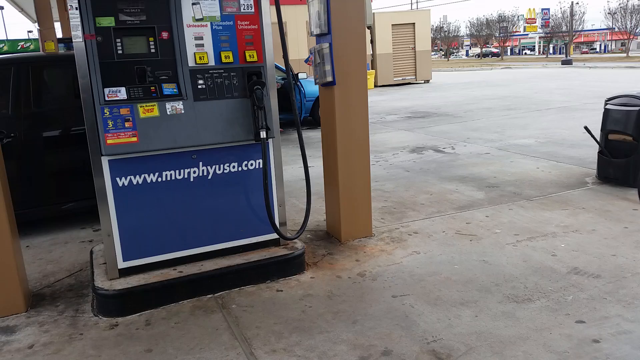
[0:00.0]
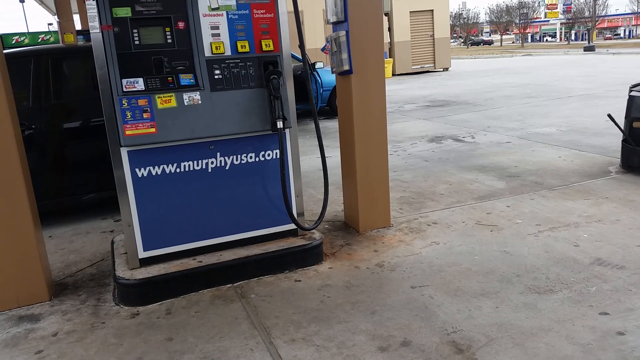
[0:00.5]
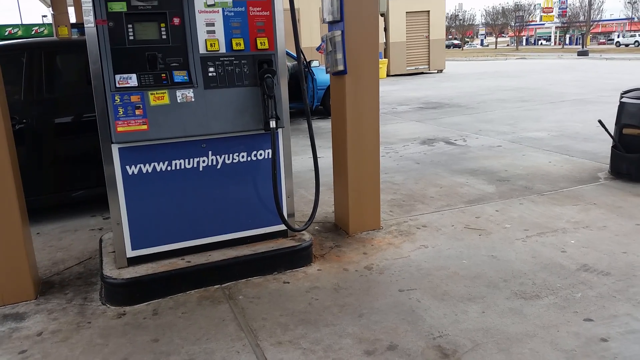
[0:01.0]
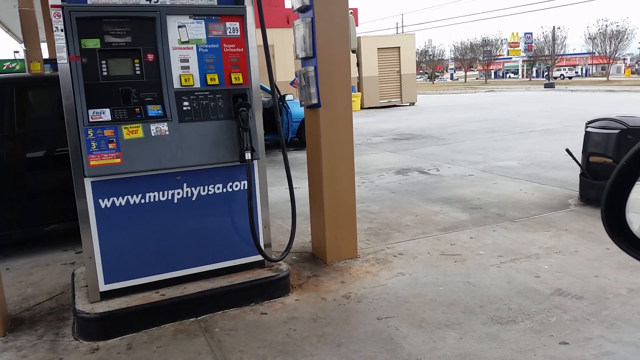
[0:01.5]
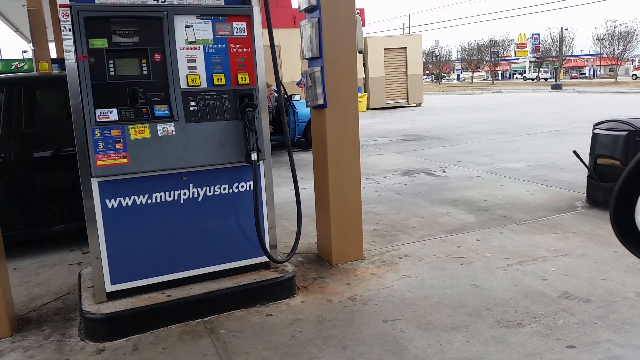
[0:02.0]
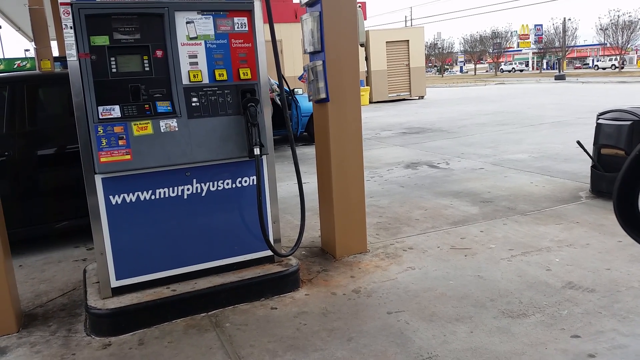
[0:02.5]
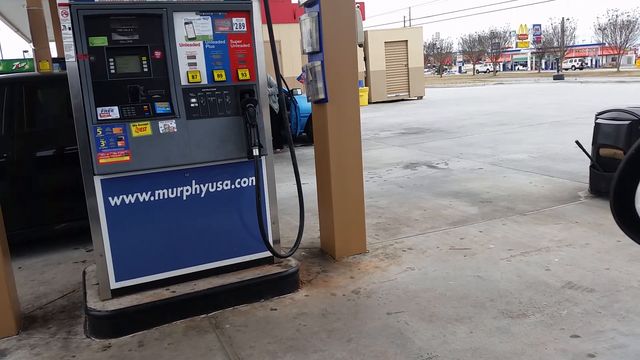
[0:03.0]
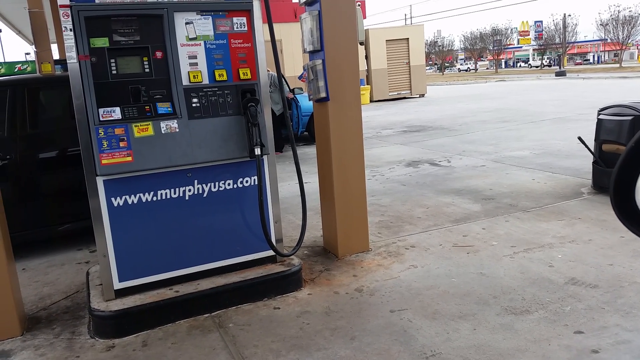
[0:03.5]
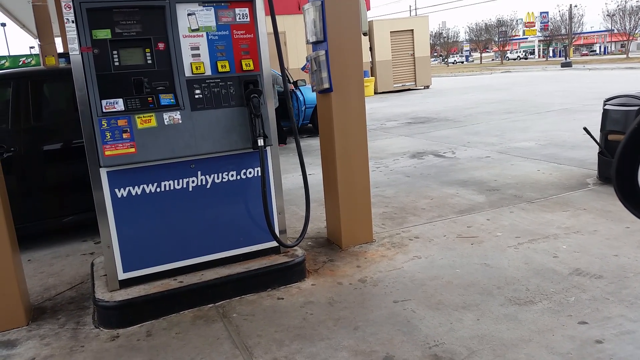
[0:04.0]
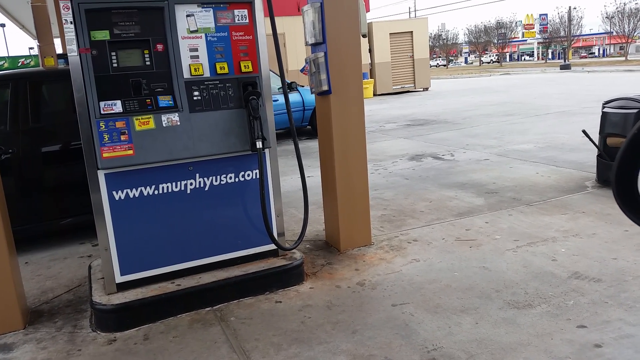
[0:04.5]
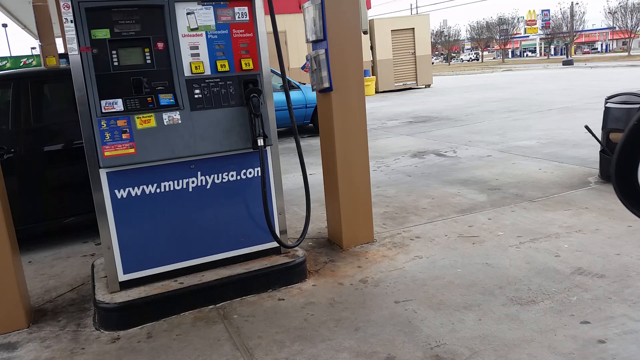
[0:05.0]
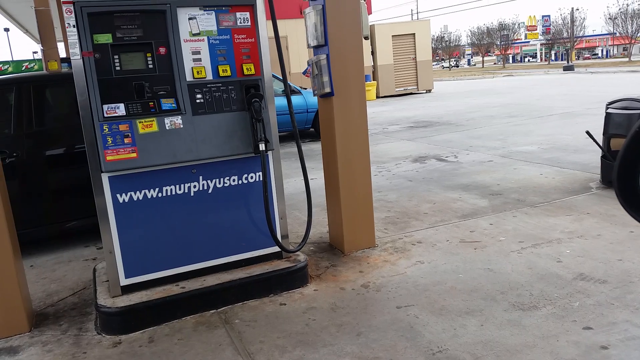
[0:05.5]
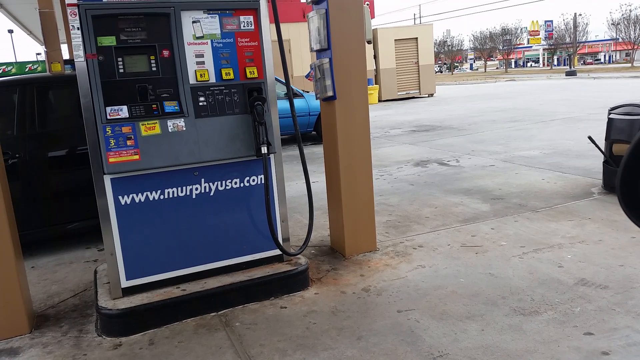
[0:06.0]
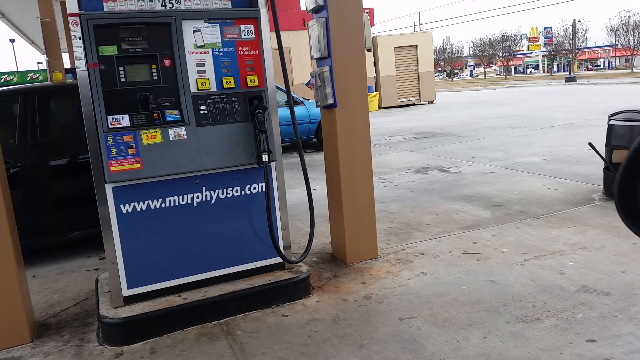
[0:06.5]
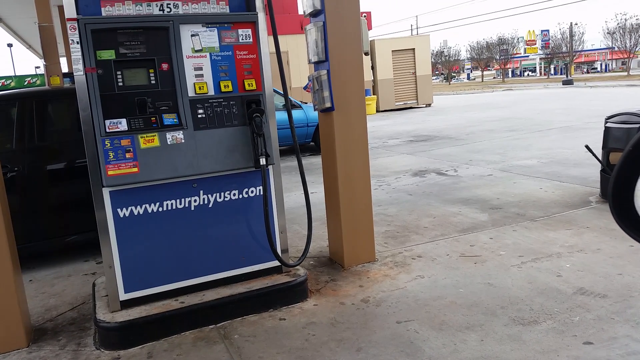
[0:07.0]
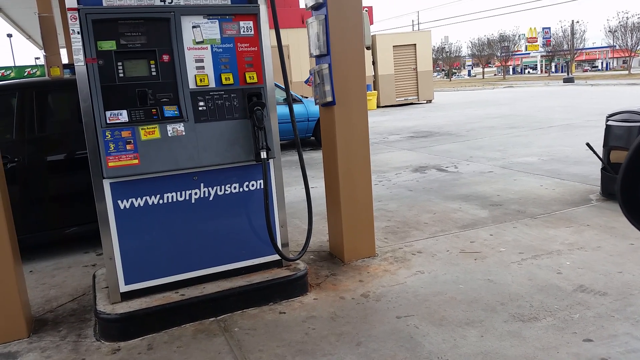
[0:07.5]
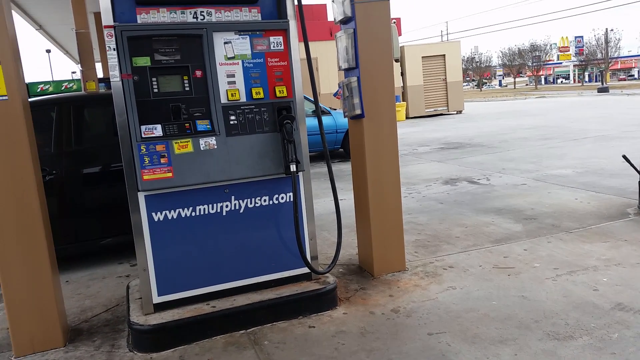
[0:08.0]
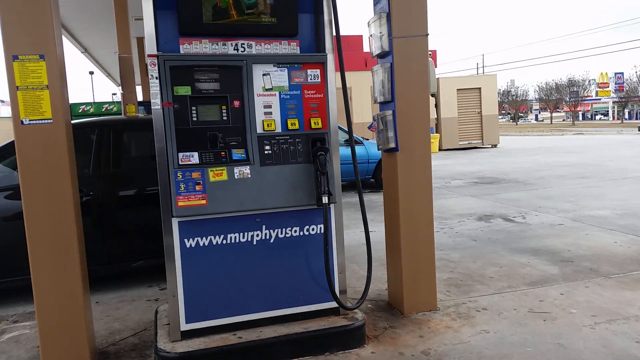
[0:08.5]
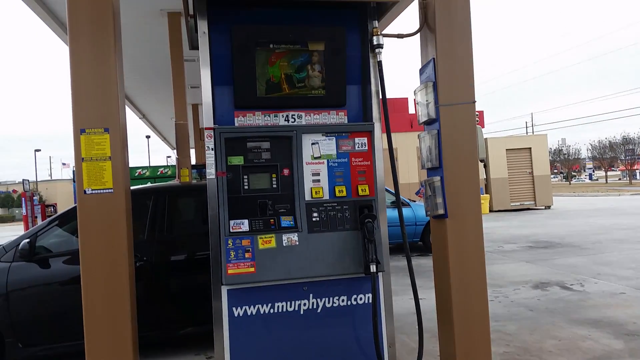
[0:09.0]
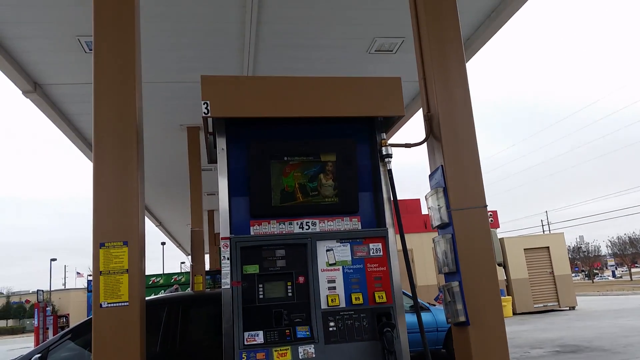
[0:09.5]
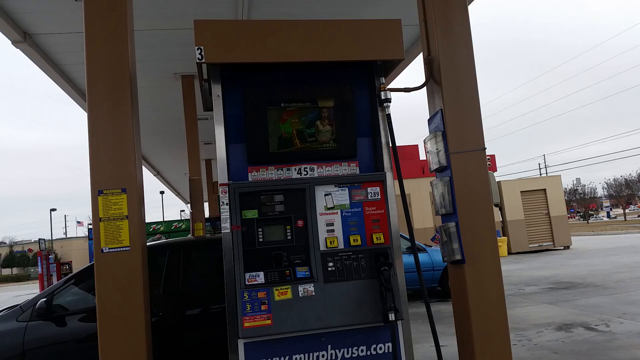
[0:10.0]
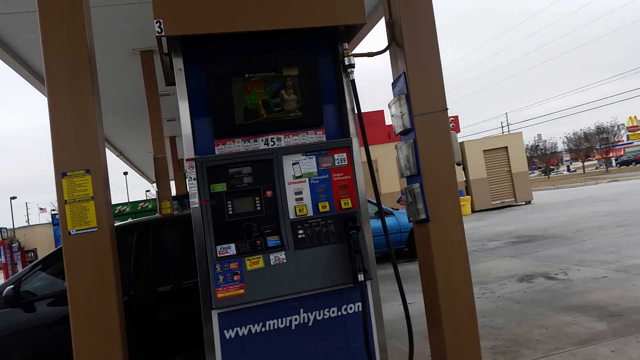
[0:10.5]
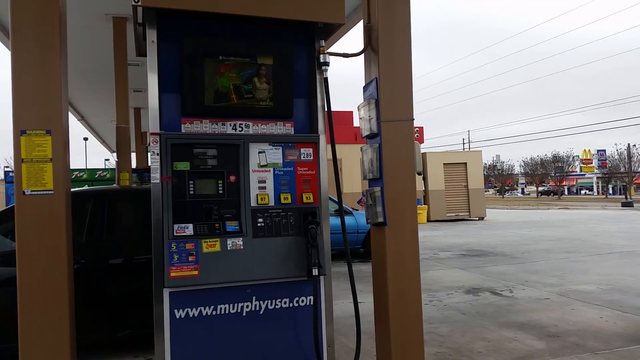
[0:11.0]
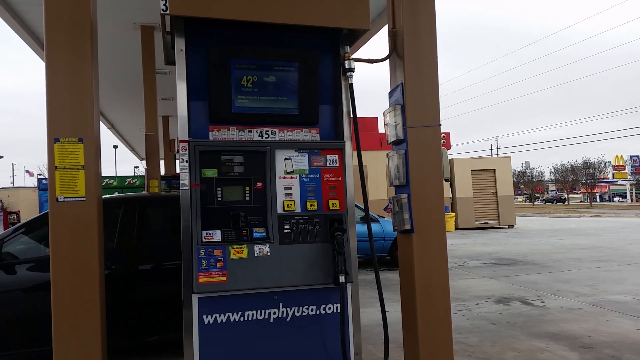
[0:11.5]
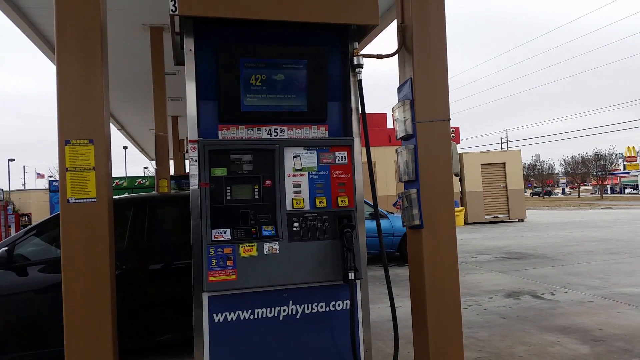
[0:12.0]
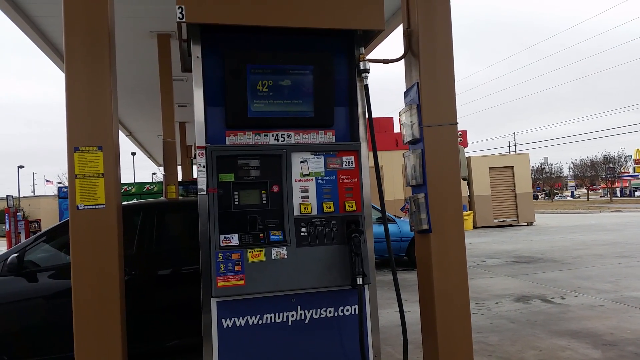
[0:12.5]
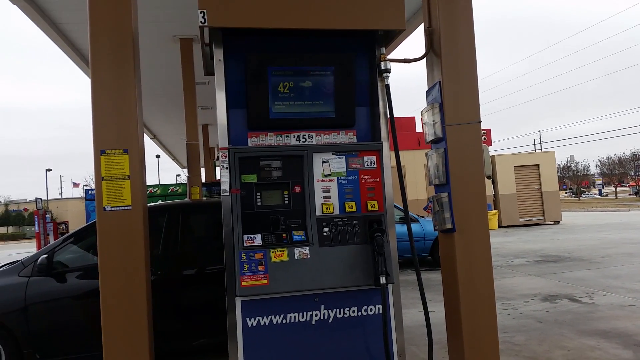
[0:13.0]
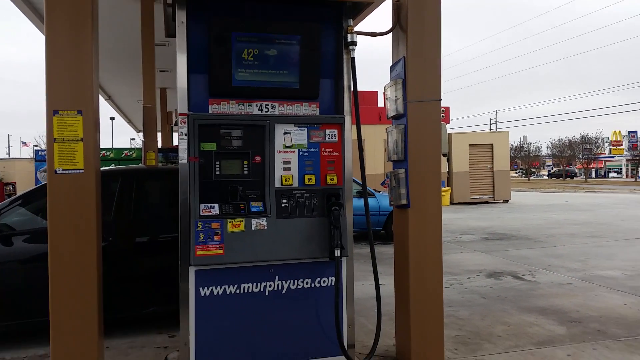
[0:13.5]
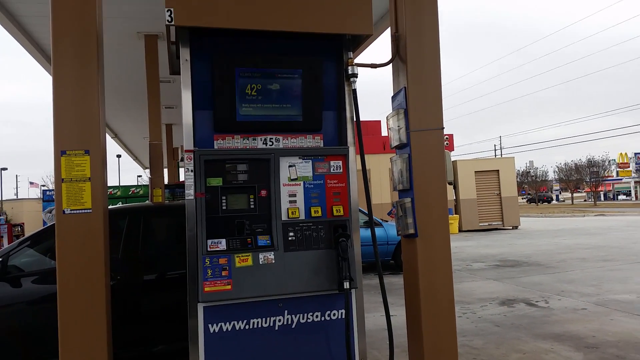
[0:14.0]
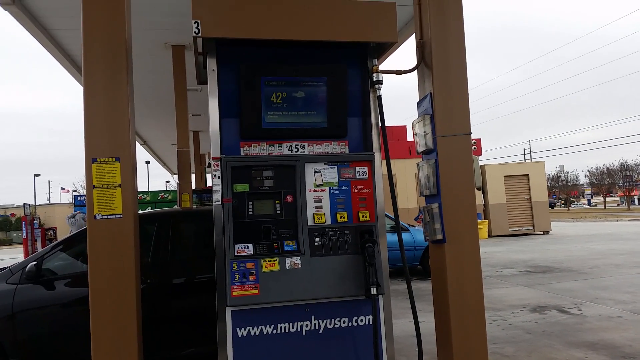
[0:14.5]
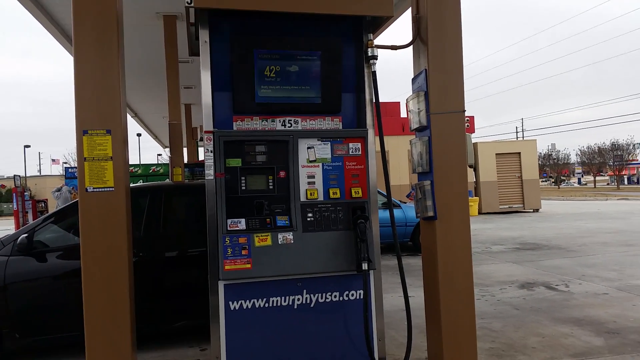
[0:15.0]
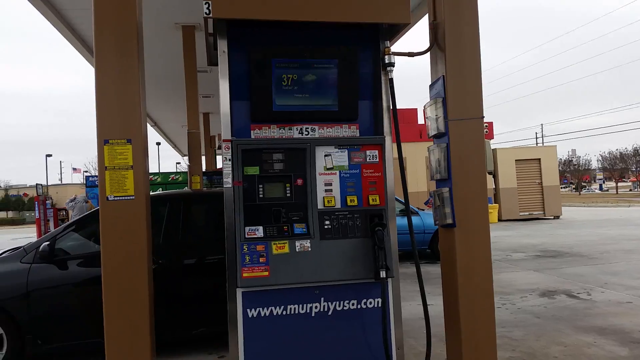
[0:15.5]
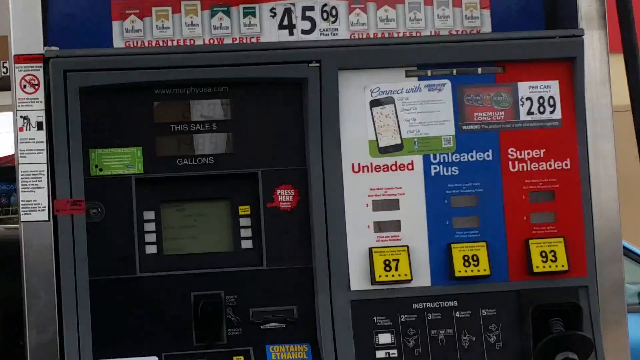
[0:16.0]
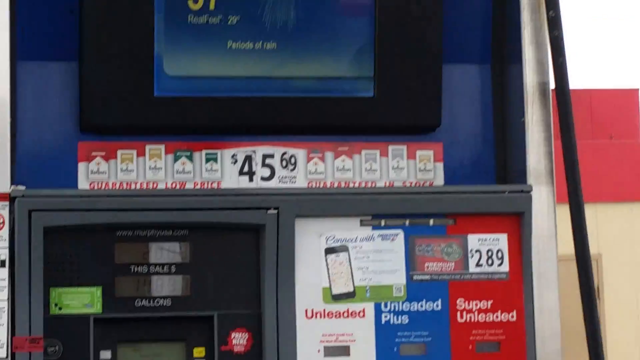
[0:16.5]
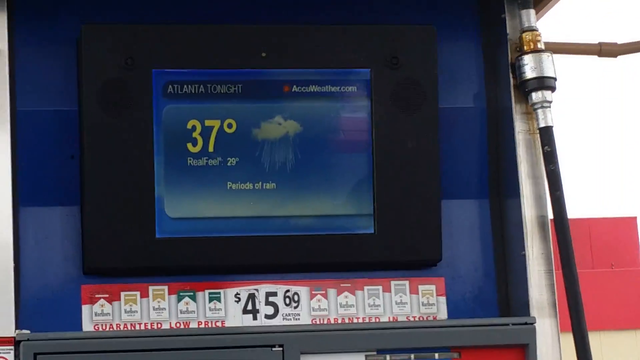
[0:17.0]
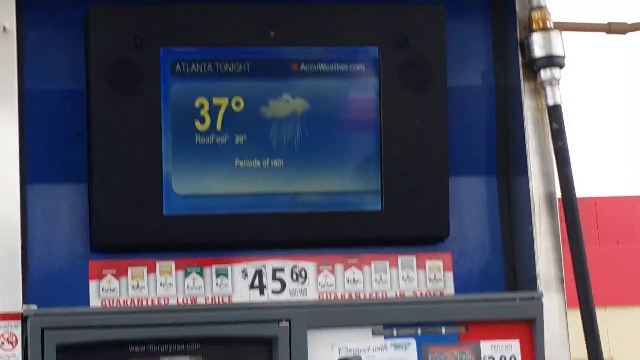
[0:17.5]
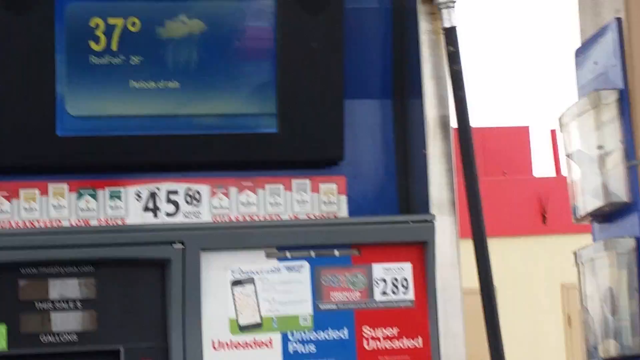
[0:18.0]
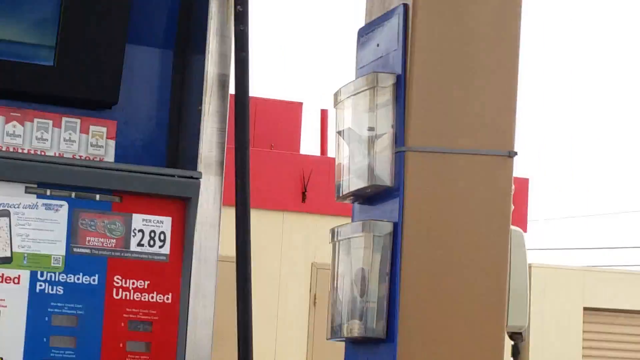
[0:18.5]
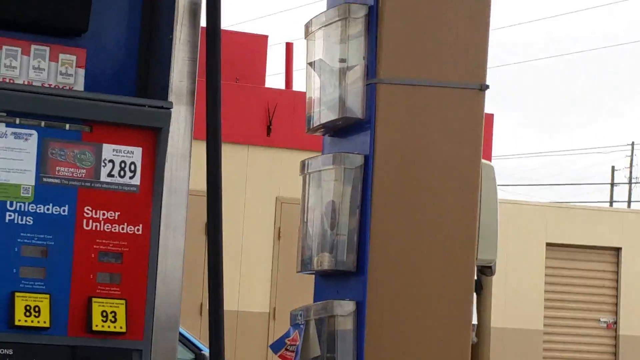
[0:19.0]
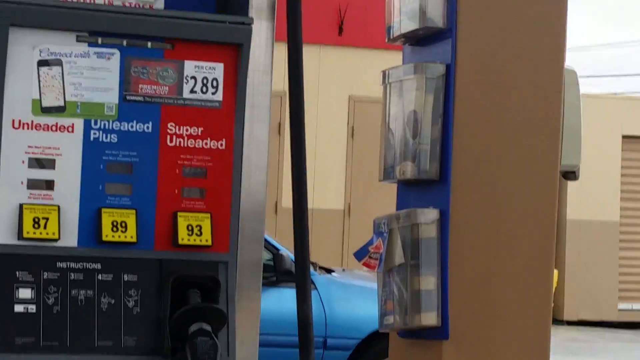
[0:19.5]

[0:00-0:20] Someone films at a gas station, apparently during the daytime. They film the pump, whose screen shows it is 42 degrees outside, then do a close-up where, apparently for another local city, it says 37 degrees. The screen on the pump shows the weather and the news. At the bottom of the pump a website address is listed as www.murphyusa.com. There are at least three separate stations with two-sided pumps. At the next pump over there is a black vehicle, and at the pump over from that there is a light blue or mid-tone blue car. A person gets out of its passenger side, leaves the passenger door open, then closes the door and goes somewhere, perhaps inside the gas station's convenience store; it is unclear because not all of that area is visible.